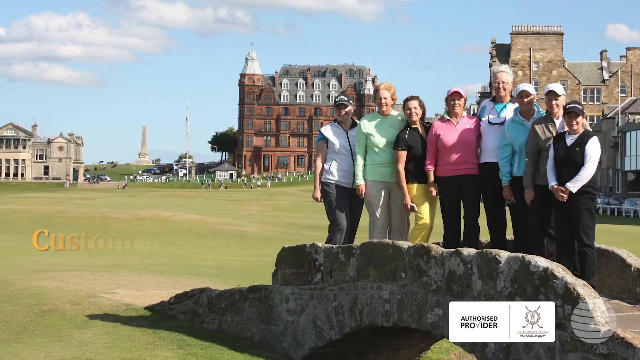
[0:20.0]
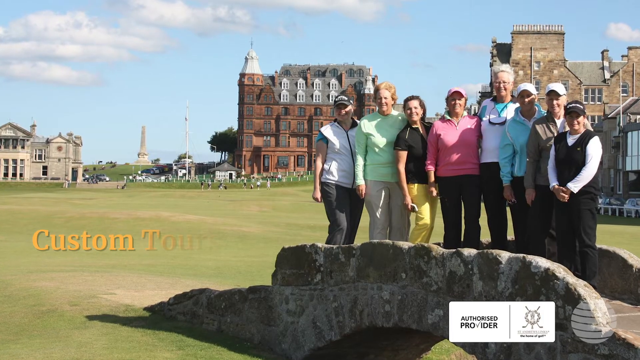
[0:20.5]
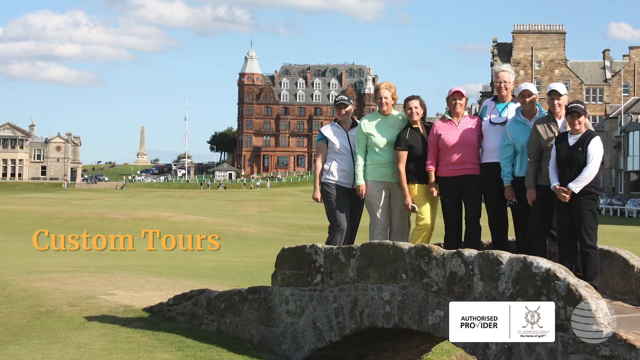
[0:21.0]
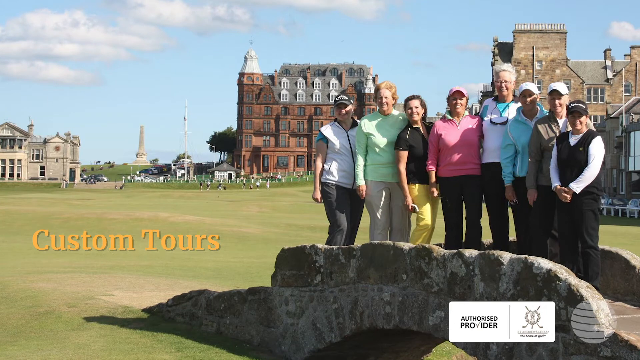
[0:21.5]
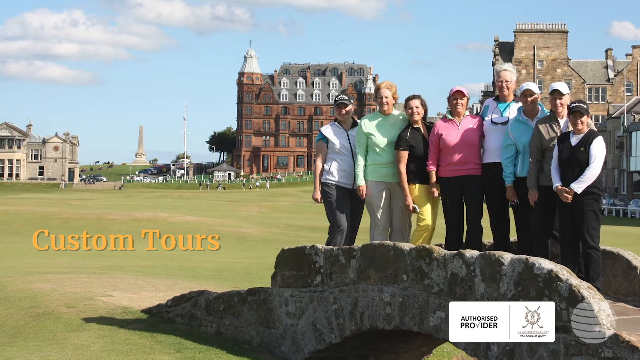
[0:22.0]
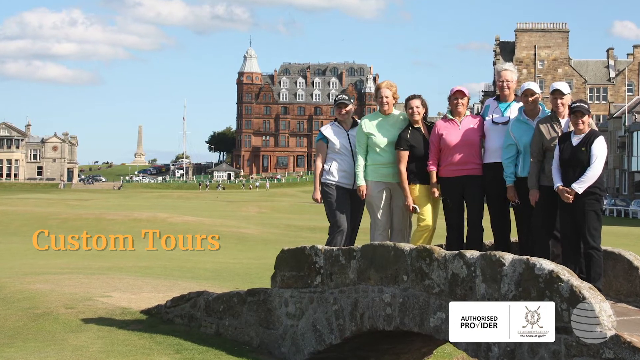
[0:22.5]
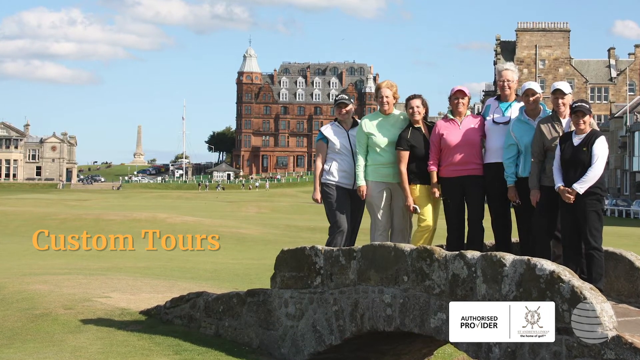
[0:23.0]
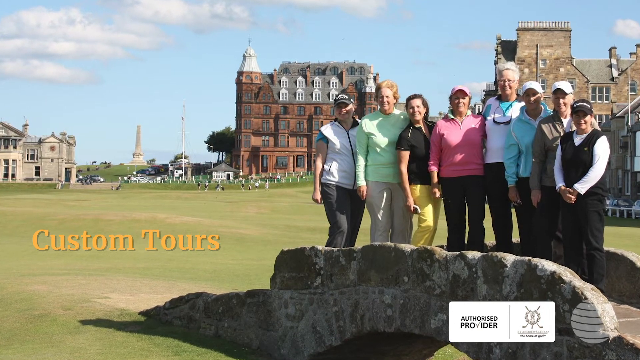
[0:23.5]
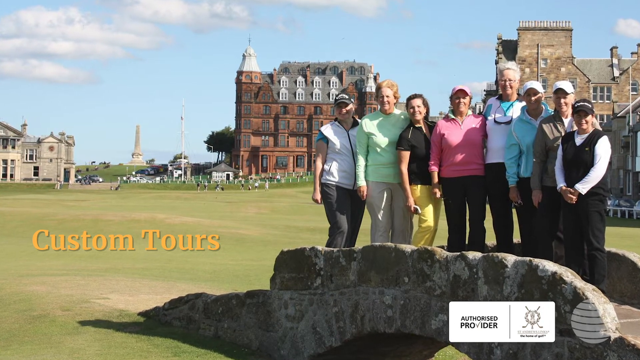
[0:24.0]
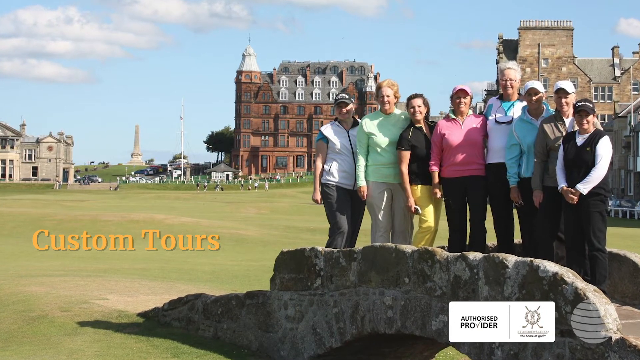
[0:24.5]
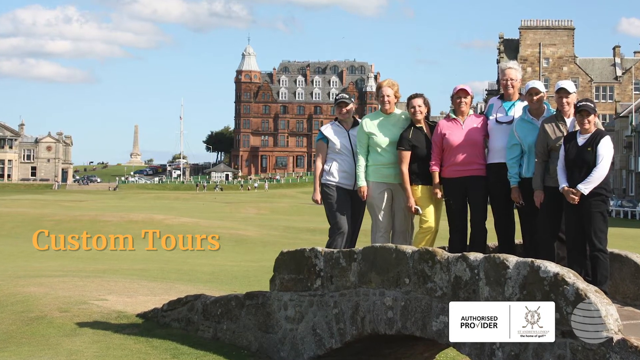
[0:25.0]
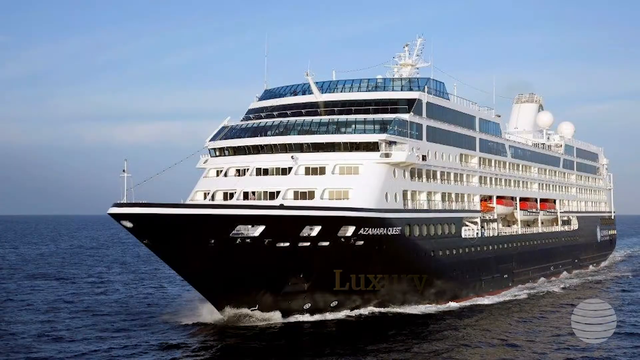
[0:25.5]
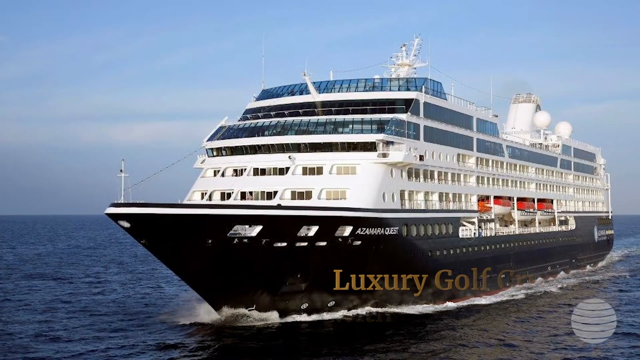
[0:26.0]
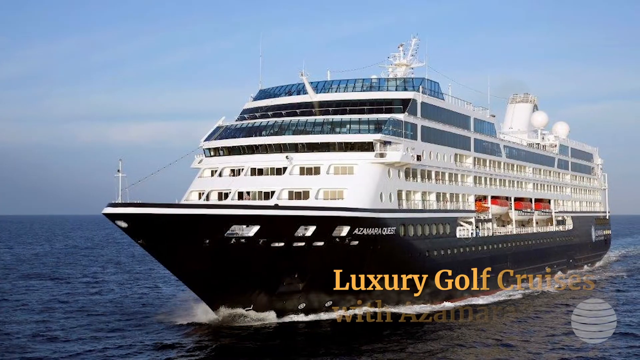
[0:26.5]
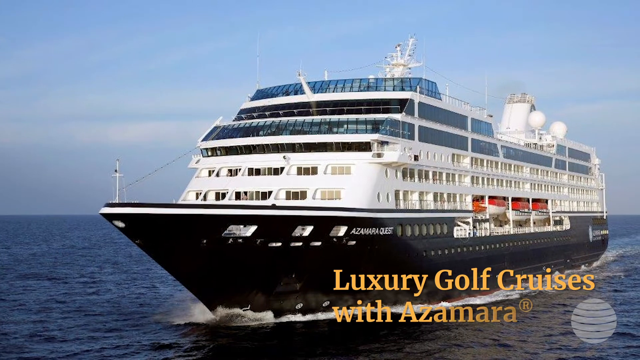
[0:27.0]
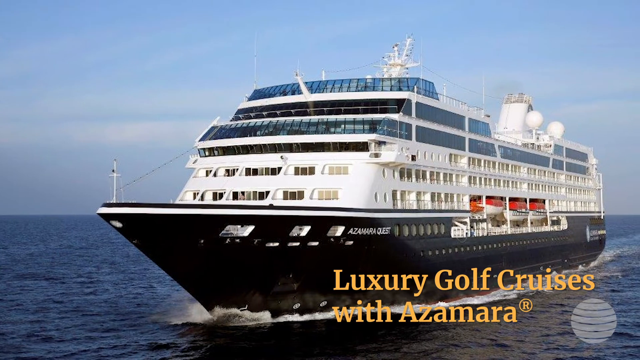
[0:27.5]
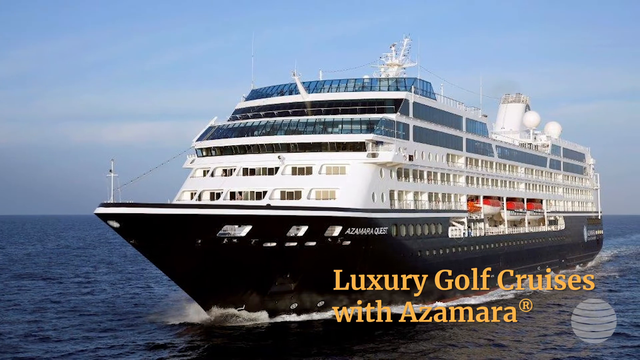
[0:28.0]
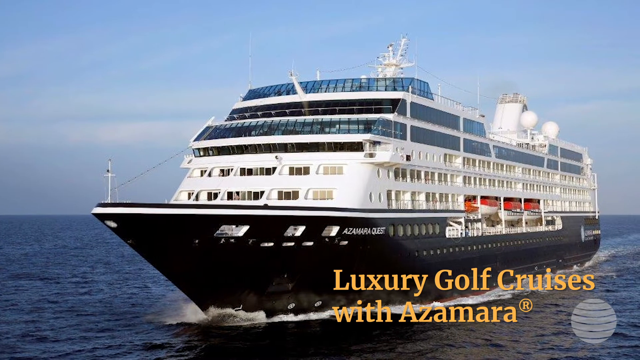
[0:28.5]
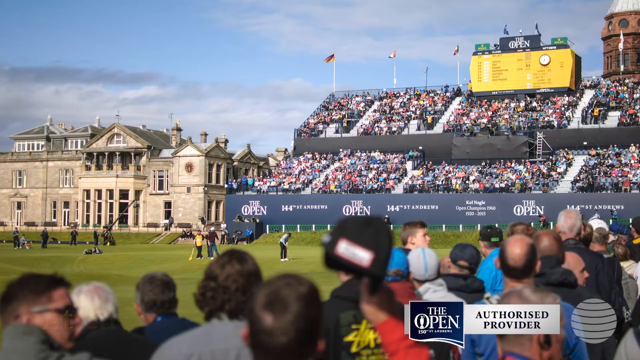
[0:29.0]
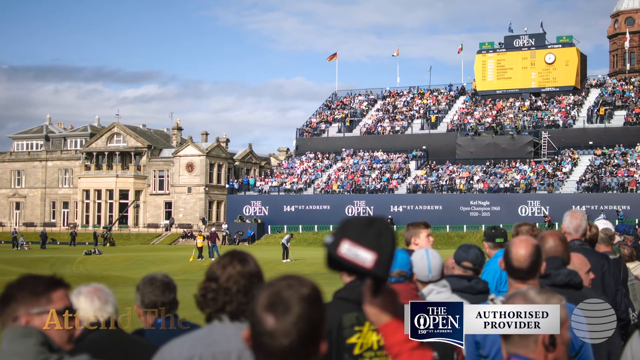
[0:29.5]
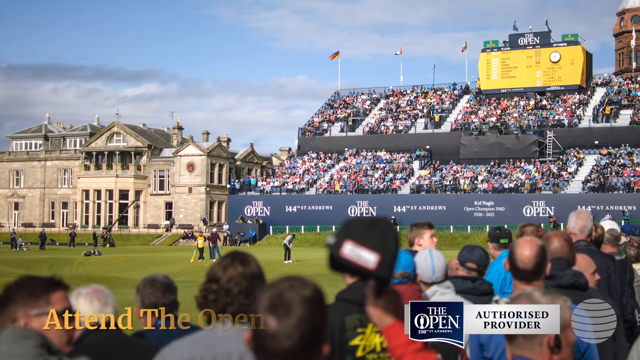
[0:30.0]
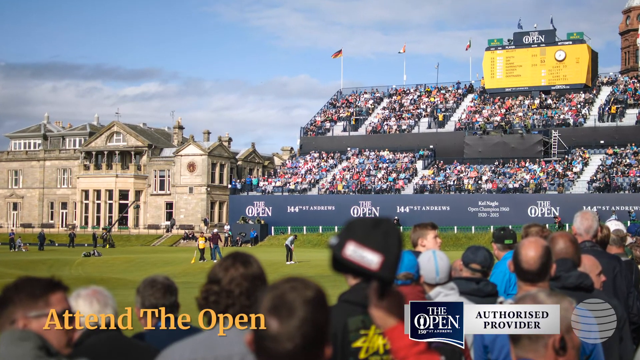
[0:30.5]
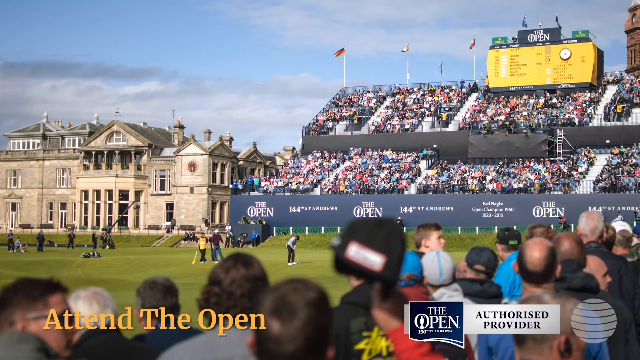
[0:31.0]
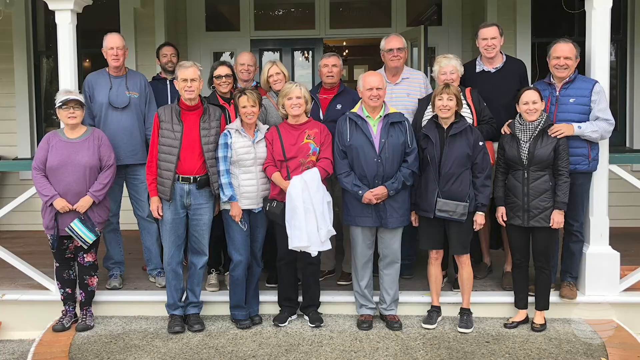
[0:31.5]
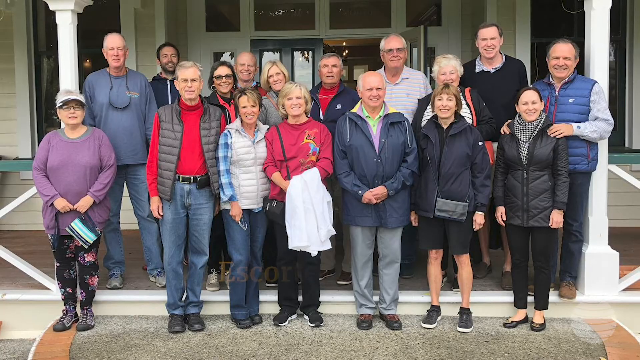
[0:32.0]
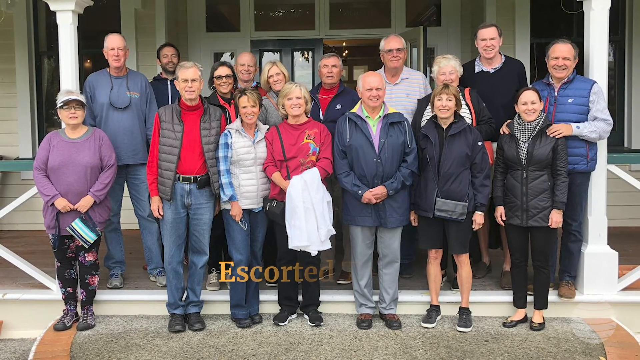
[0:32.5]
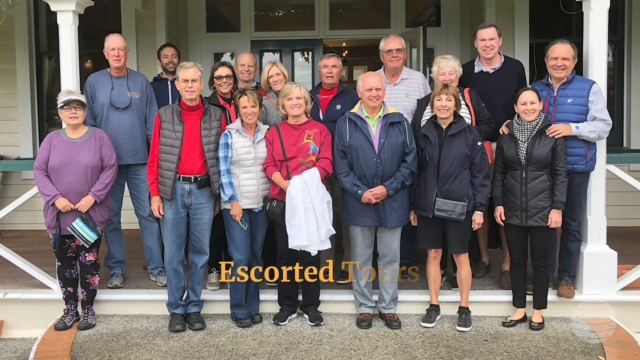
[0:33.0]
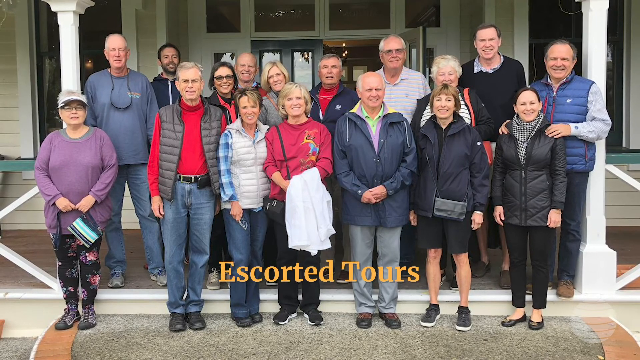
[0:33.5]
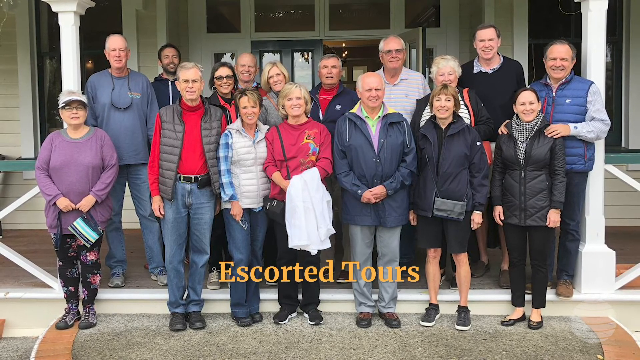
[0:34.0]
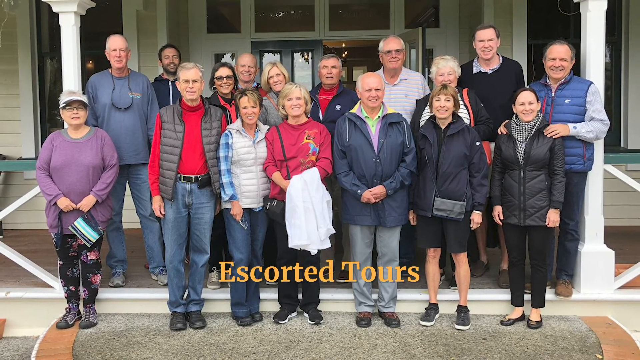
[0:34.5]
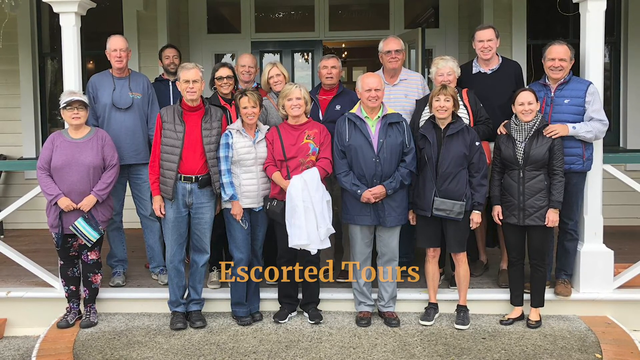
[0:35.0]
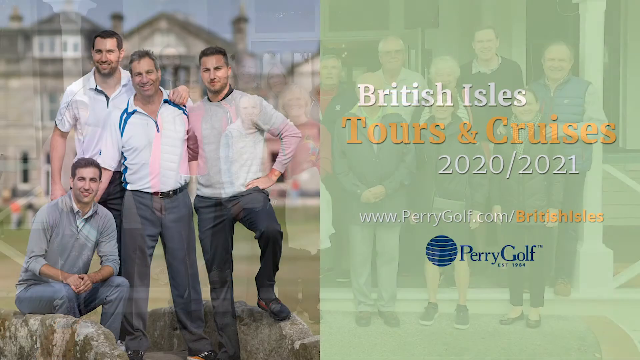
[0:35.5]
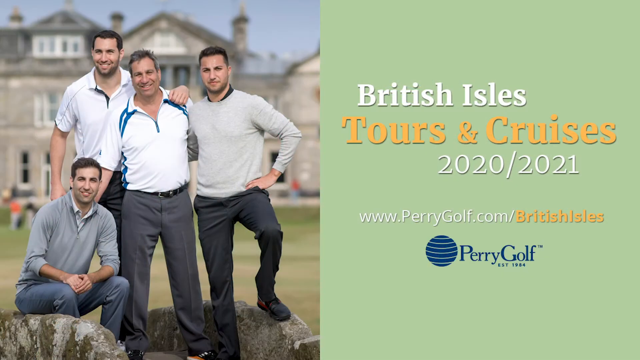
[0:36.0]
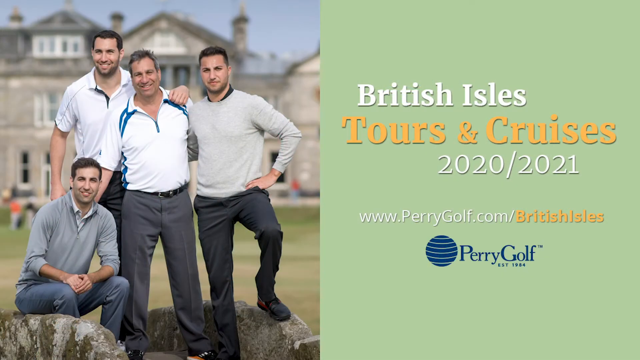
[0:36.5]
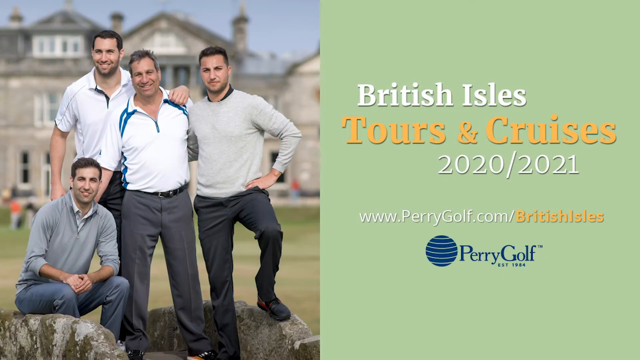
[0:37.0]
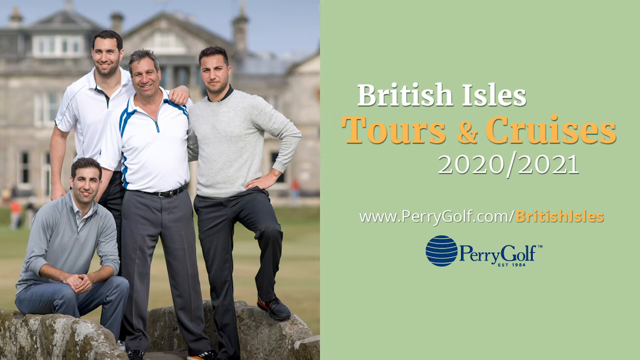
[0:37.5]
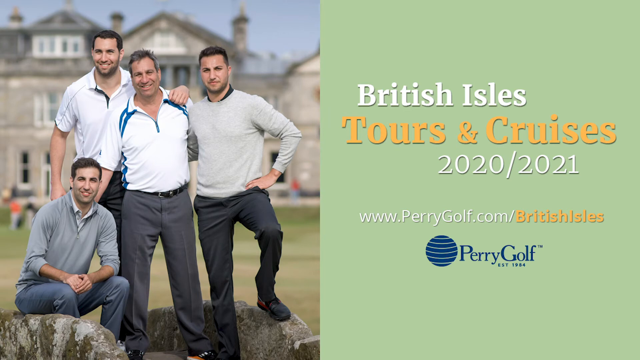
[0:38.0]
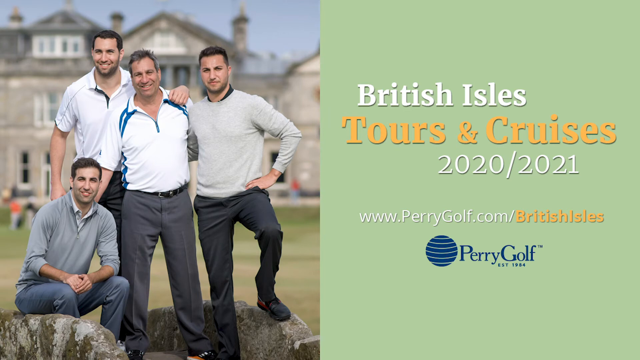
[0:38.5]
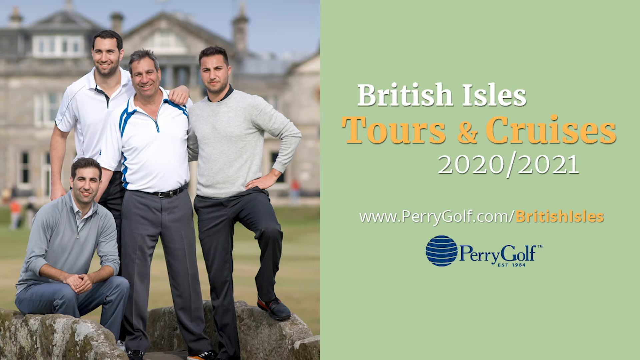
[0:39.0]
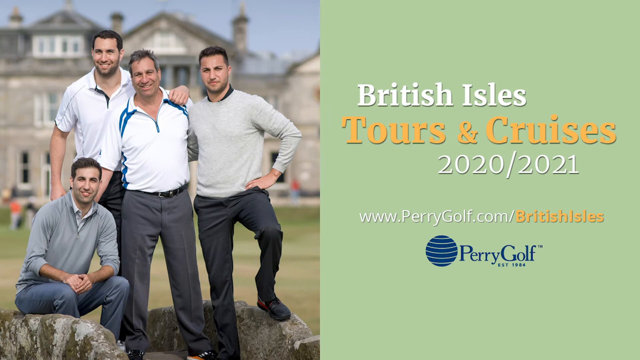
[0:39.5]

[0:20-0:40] A small, low stone bridge has various old, manor-house-looking buildings in the background. A group of golfers, apparently three men and five women, stand on the bridge in various golf gear, most of them in baseball caps. Yellow text on the left reads "custom tours", showing the video is an advertisement rather than a documentary. The scene cuts to a photo of a smaller cruise ship, clearly more for cruising along the coast than across the ocean, with a black bottom, a white top, glass railings and a white smokestack in the middle. The ship's name, "Azamara Quest", is in white, and text in the lower right-hand corner reads "luxury golf cruises with Azamara". Next is a photo of a golf tournament labeled "The Open", with big stands next to a big tan manor-house-looking building and text reading "The Open, 144th St. Andrews". On the left-hand side it says "attend The Open", and on the right-hand side "The Open, authorized provider". Another photo shows a group of various golfers, many wearing overcoats or vests, with yellow text reading "escorted tours". Then four men in polo shirts and sweaters stand in front of the tan manor house. On the right side, a big green rectangle reads "British Isles Tours and Cruises 2020/2021 www.perrygolf.com/BritishIsles", followed by a blue Perry Golf logo with the globe symbol seen earlier in the lower right-hand corner.